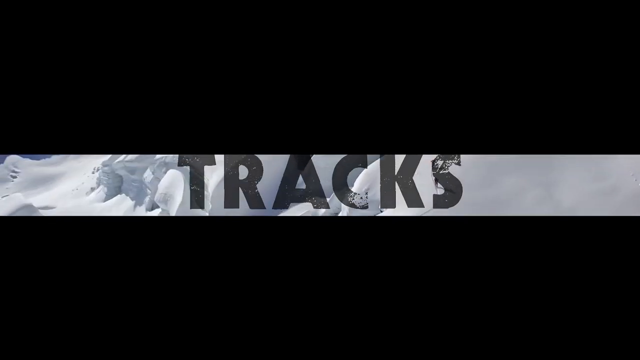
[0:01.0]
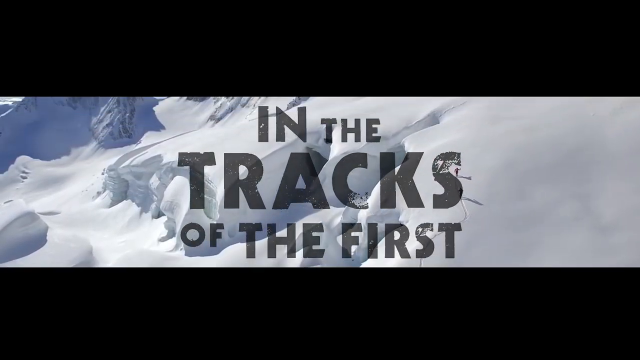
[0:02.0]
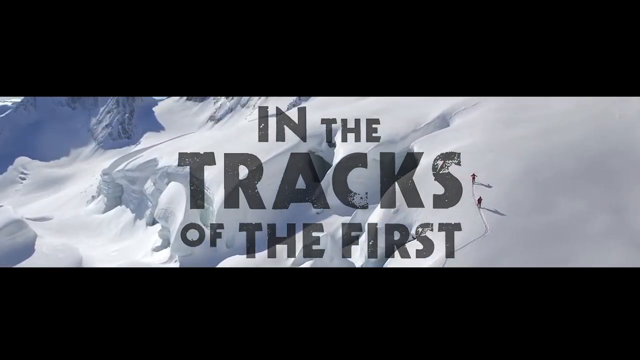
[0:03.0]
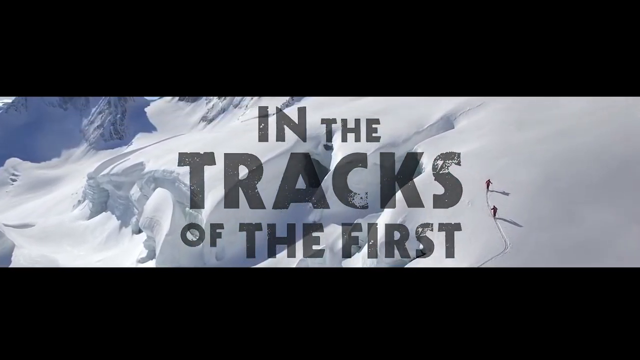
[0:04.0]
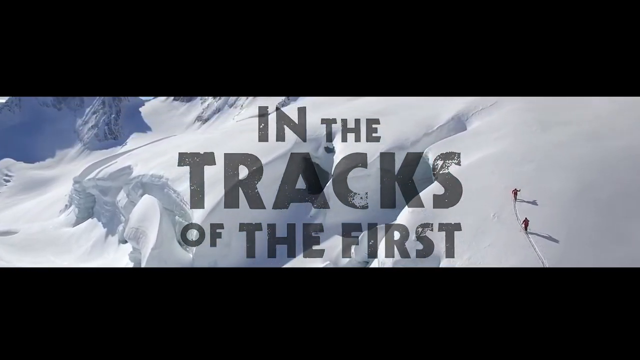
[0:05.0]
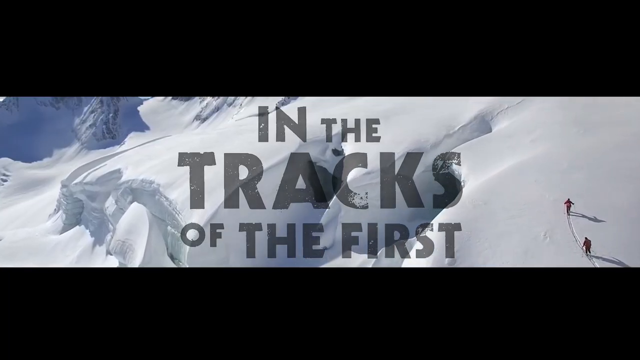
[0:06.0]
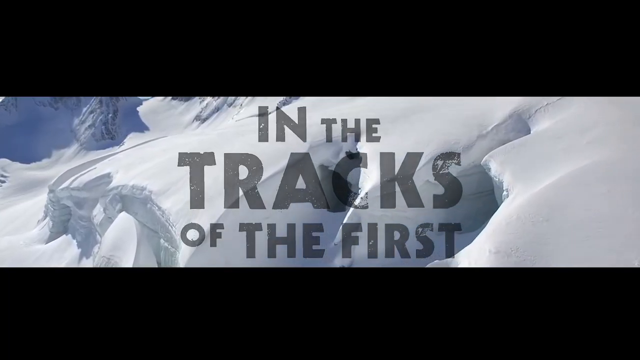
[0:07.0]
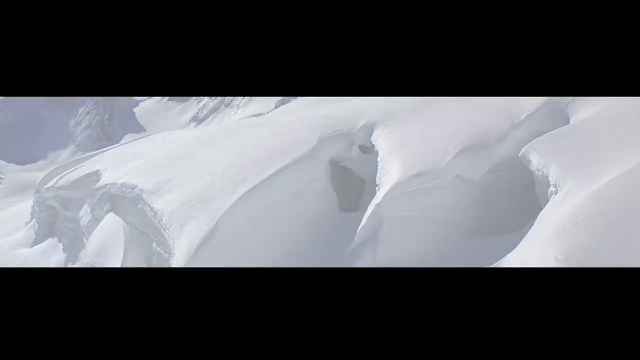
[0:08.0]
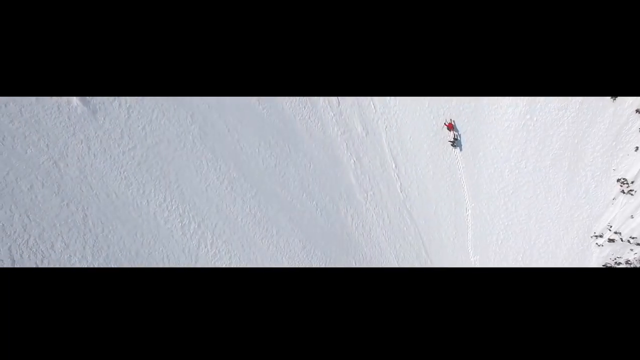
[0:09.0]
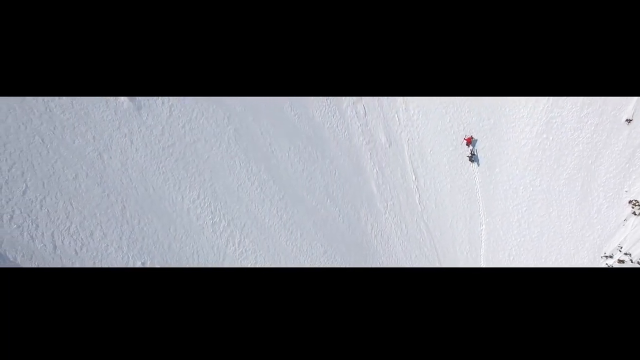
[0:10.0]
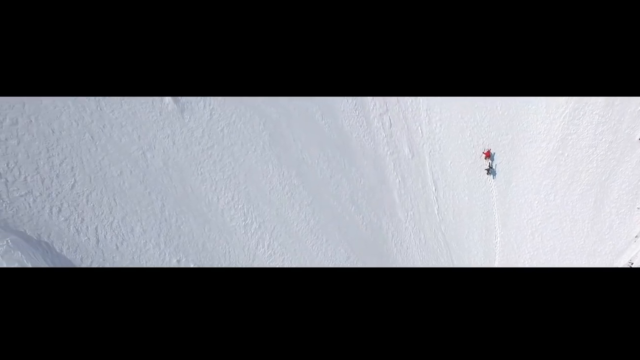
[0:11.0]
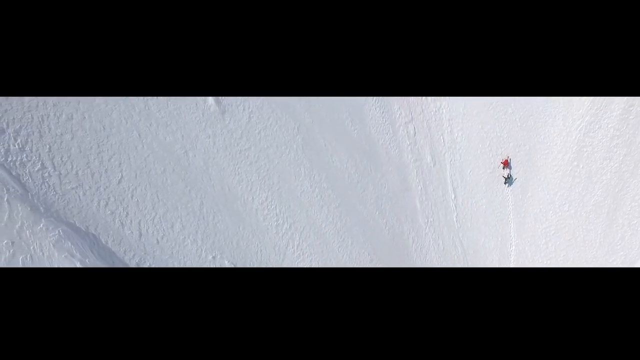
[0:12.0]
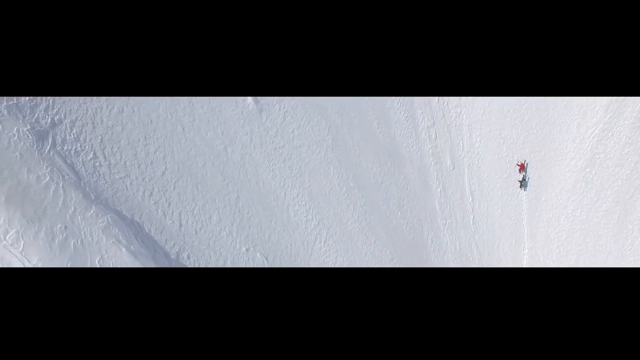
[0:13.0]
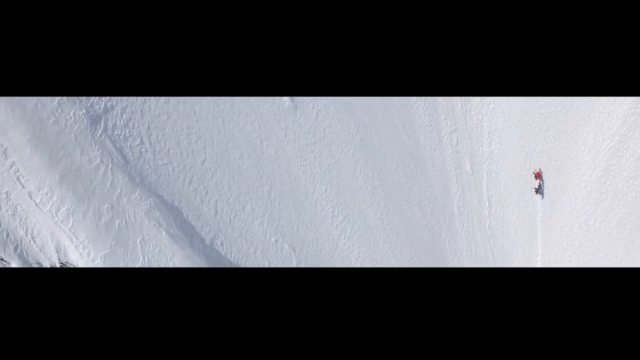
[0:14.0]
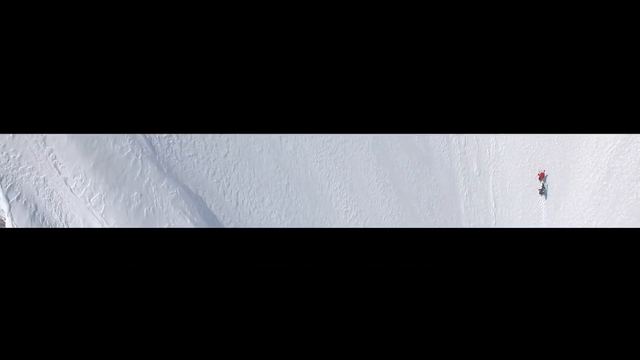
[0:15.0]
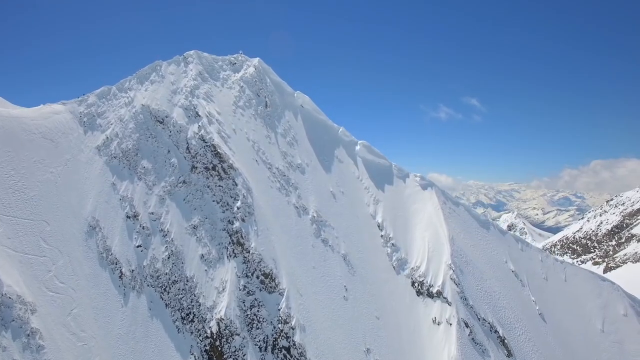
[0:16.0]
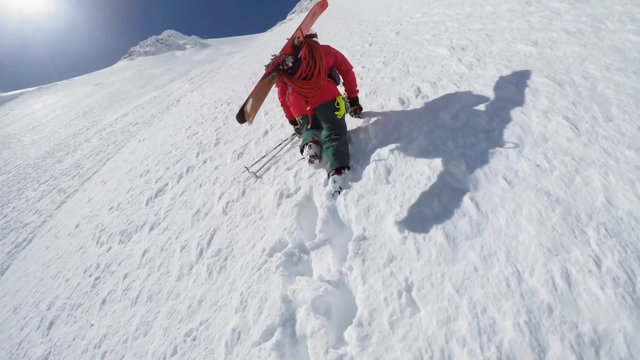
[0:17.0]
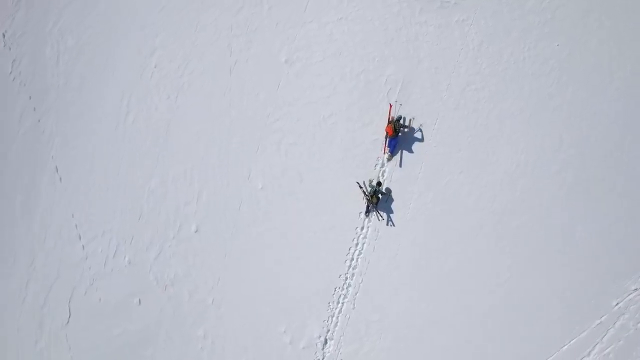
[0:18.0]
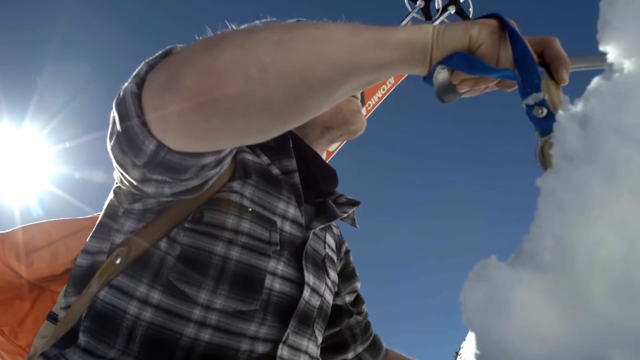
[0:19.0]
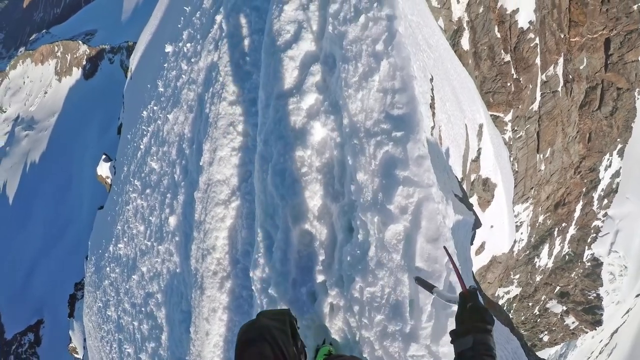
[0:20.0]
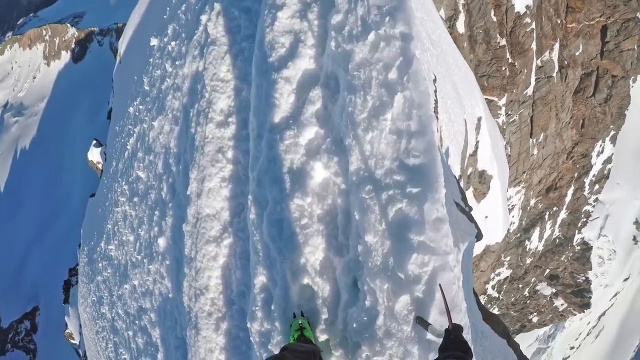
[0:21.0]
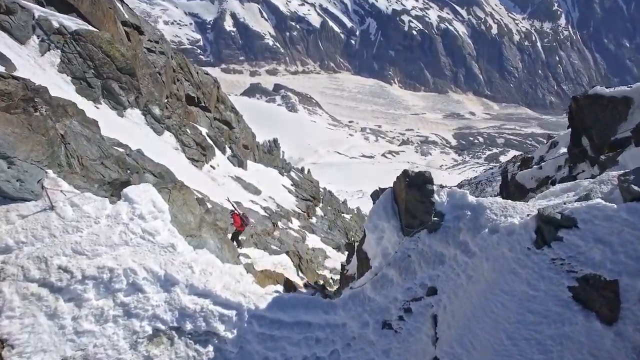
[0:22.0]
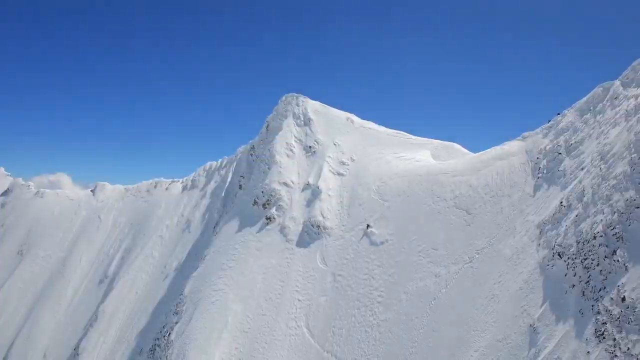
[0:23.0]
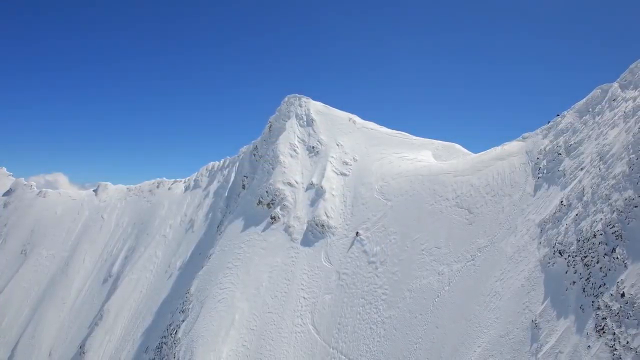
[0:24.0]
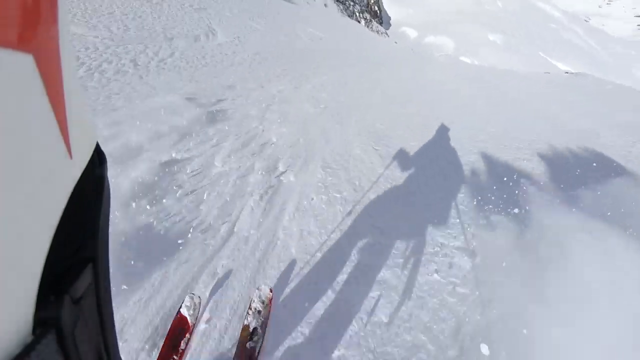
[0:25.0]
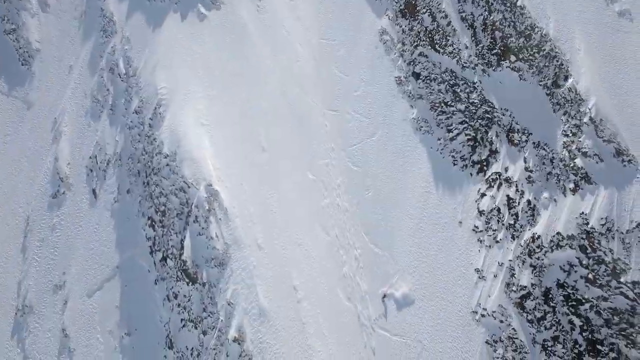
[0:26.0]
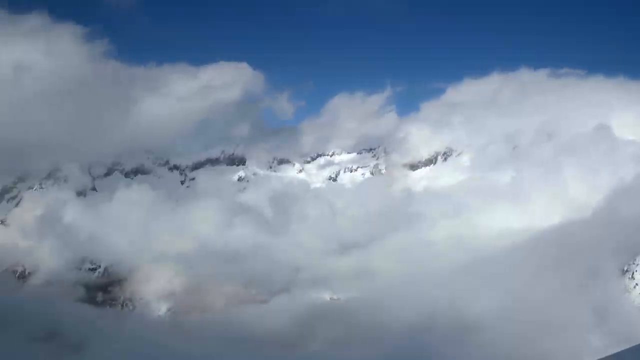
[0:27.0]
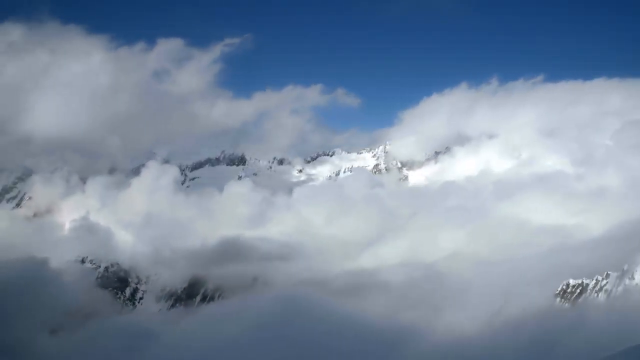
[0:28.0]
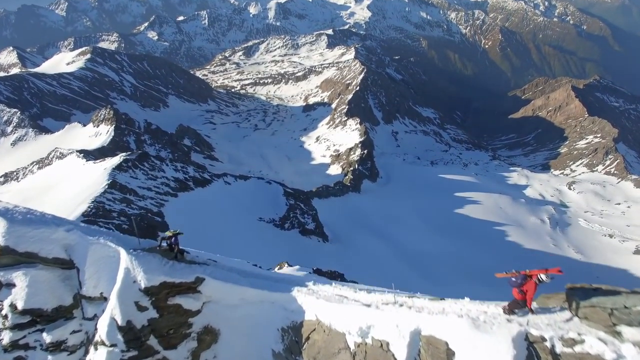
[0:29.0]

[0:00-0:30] Text appears on the screen over a background video that shows an icy mountain from a top view. The camera zooms away, and people are seen skating along the mountain. A black transition follows, and men are shown carrying ice skating equipment and climbing along the surface, clamping down as they go. They are wearing a red jacket and another.